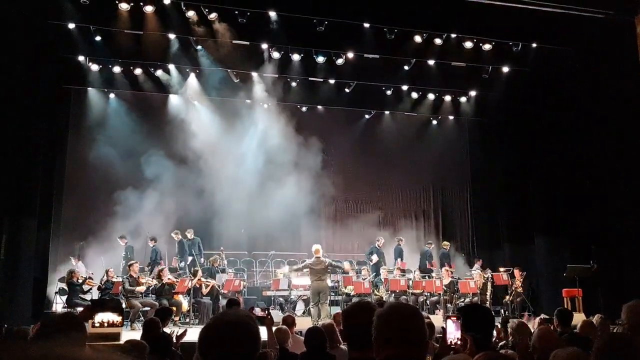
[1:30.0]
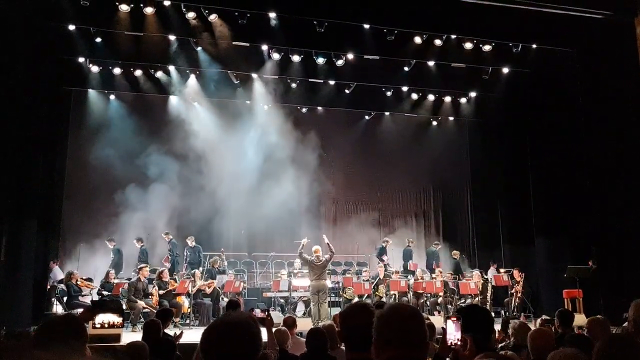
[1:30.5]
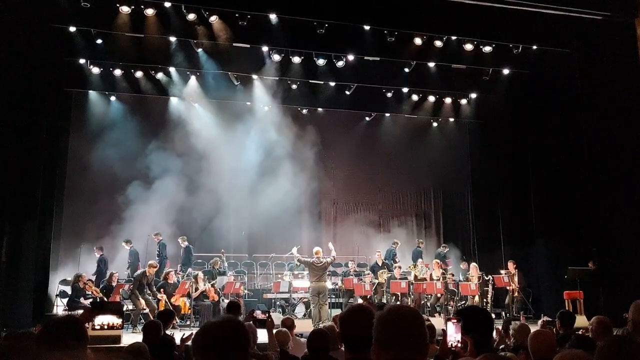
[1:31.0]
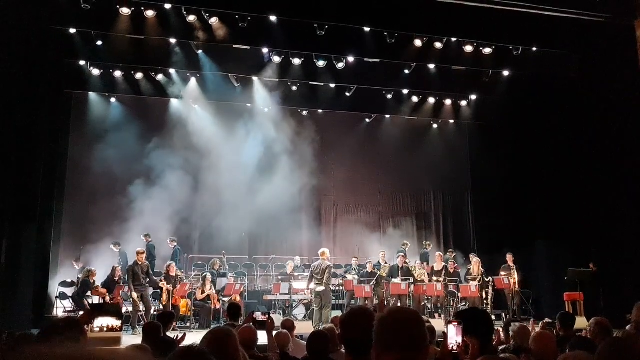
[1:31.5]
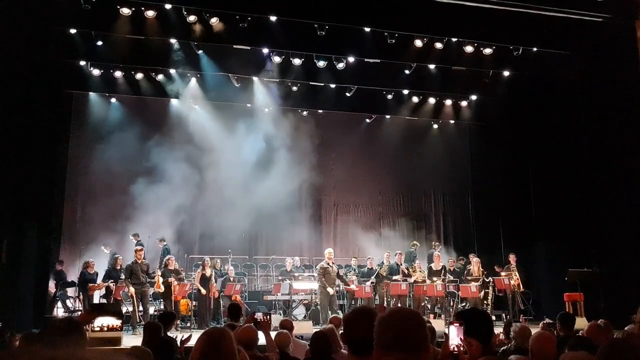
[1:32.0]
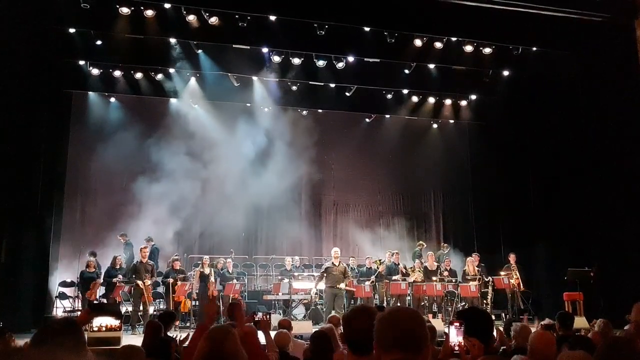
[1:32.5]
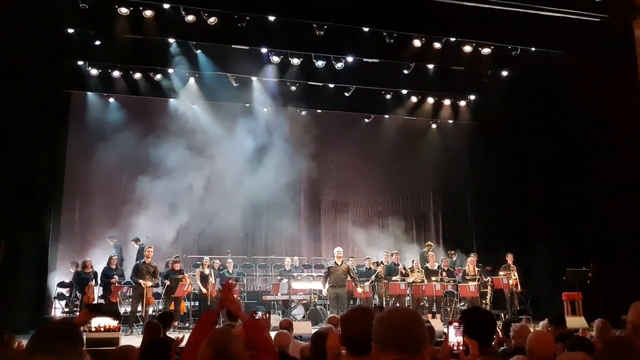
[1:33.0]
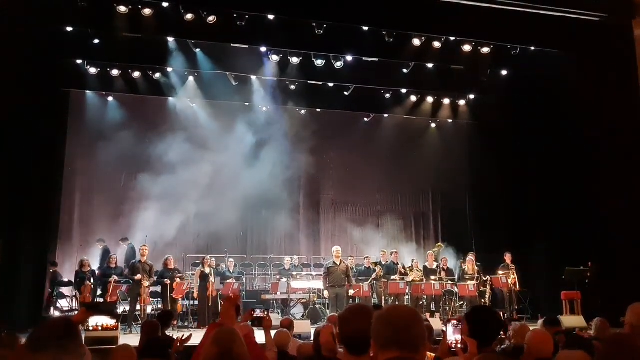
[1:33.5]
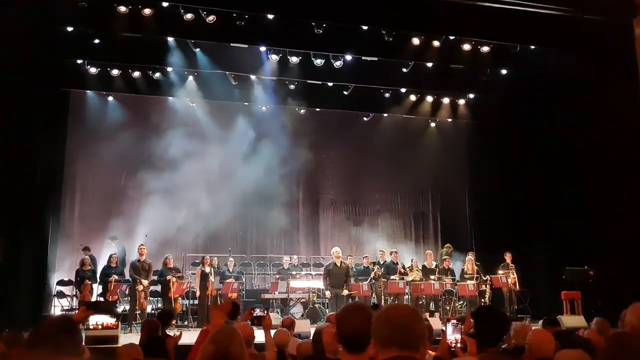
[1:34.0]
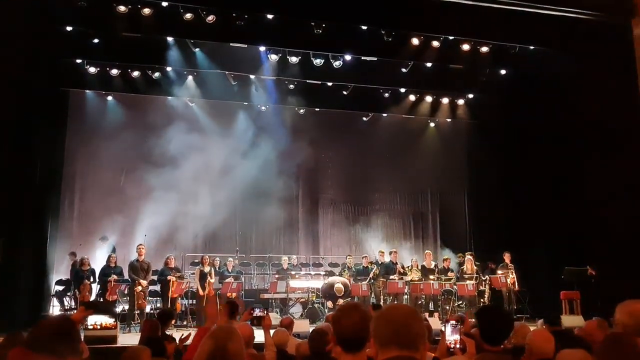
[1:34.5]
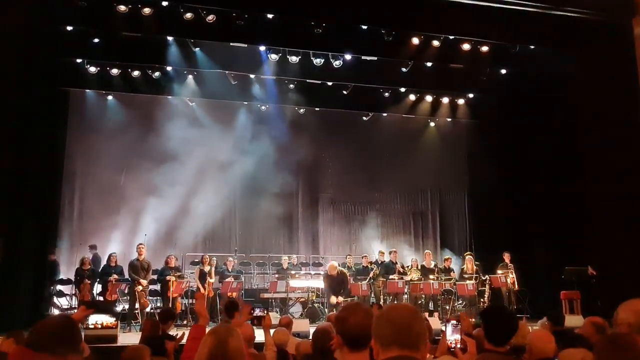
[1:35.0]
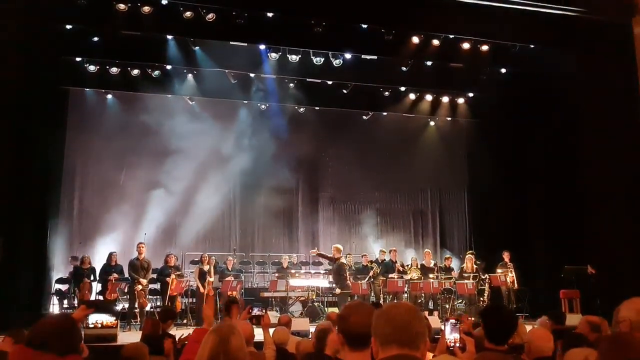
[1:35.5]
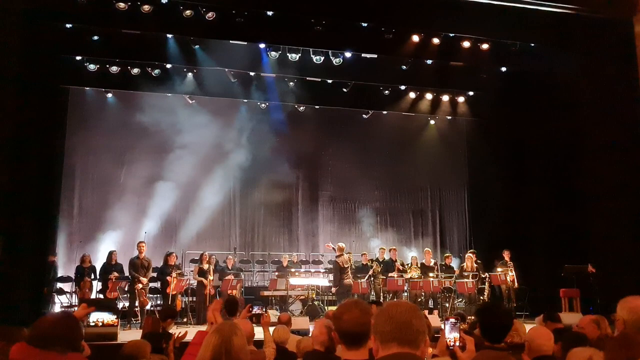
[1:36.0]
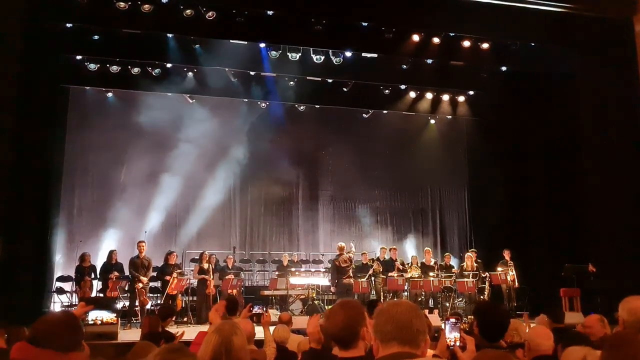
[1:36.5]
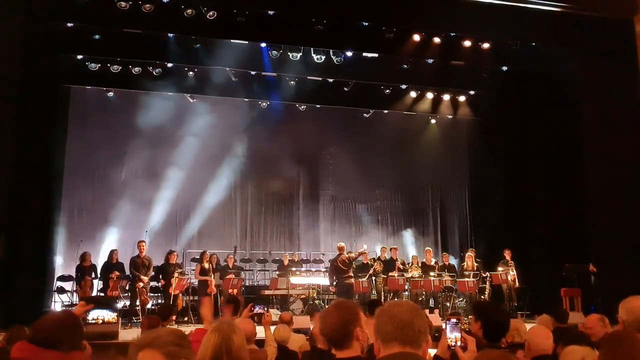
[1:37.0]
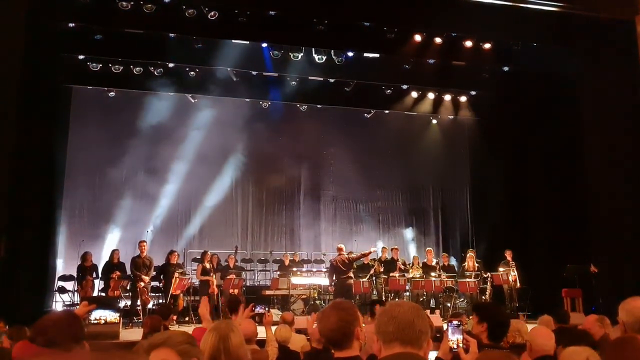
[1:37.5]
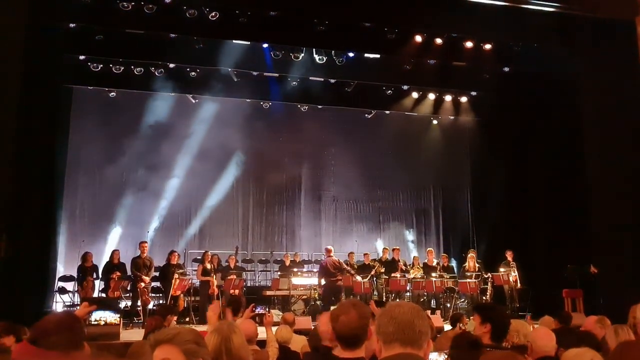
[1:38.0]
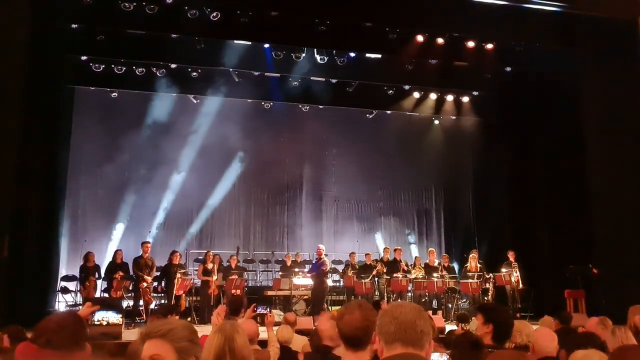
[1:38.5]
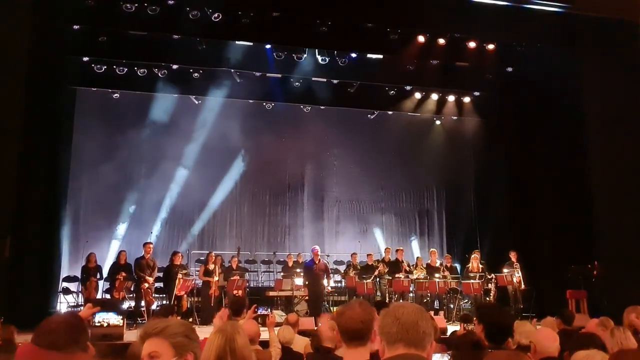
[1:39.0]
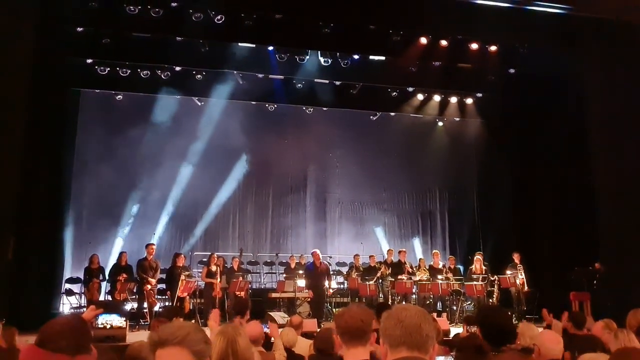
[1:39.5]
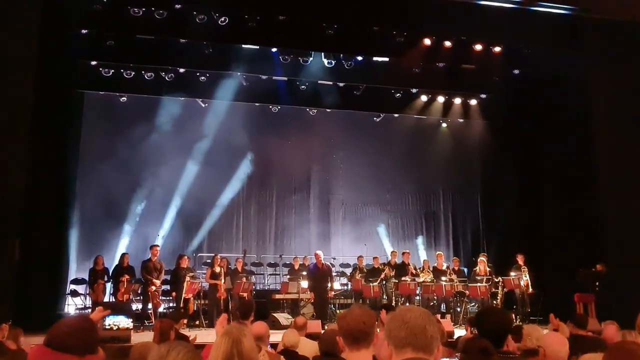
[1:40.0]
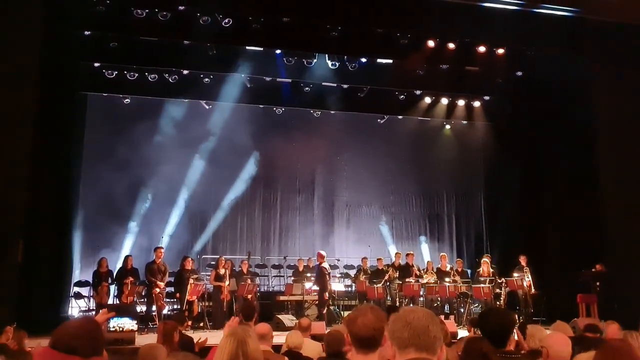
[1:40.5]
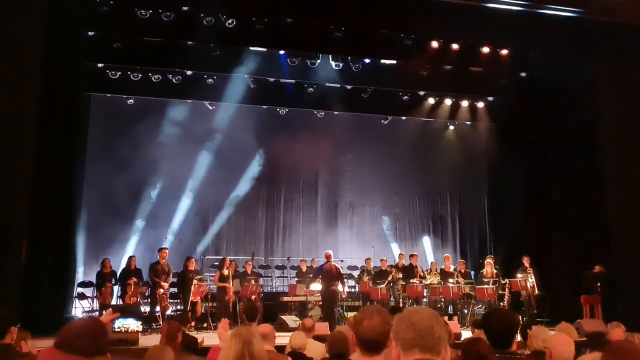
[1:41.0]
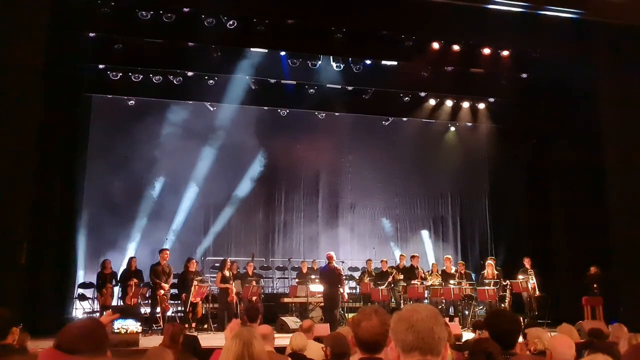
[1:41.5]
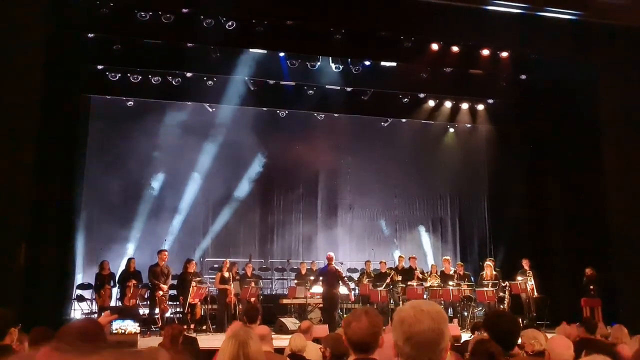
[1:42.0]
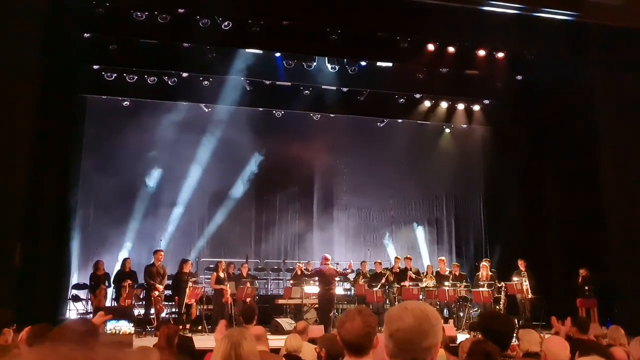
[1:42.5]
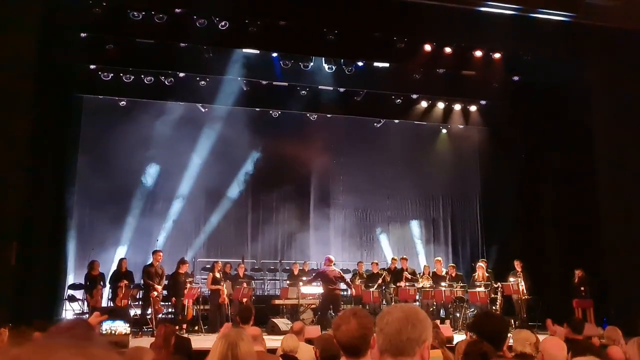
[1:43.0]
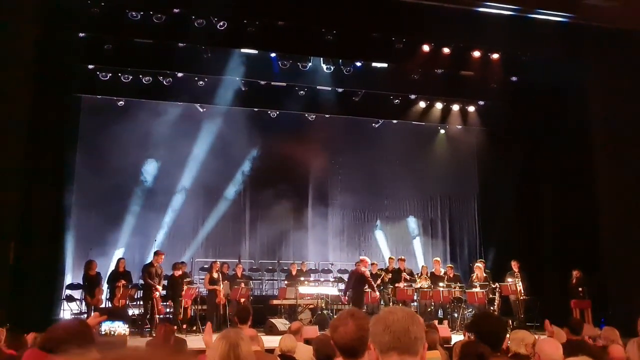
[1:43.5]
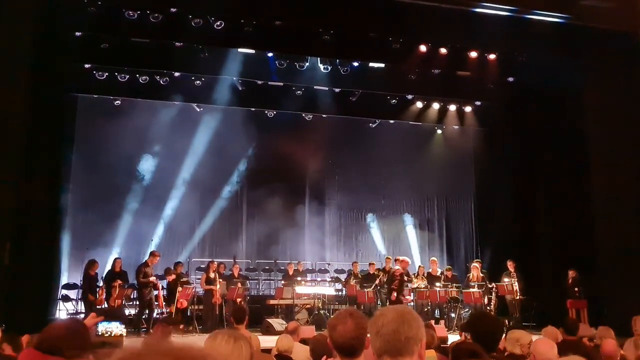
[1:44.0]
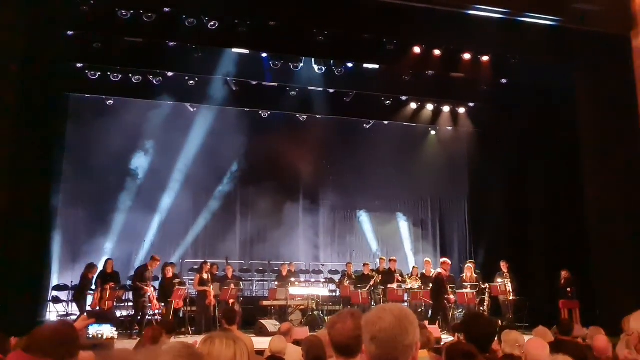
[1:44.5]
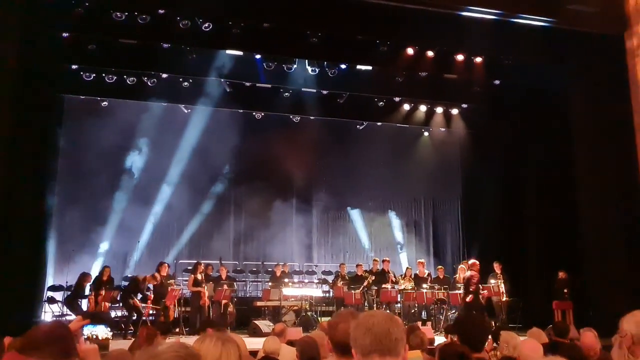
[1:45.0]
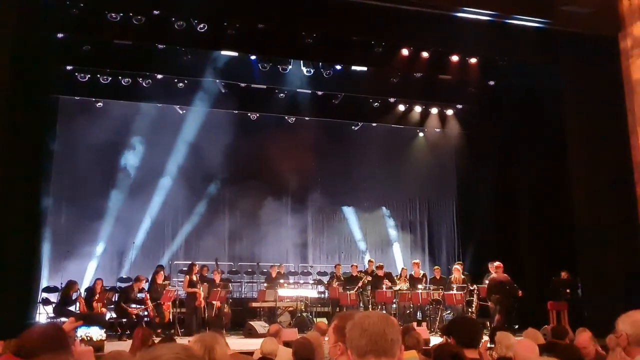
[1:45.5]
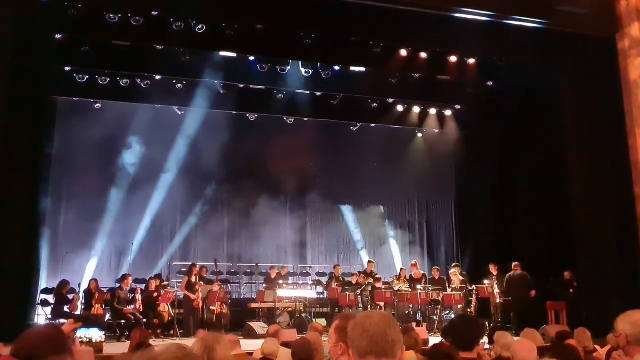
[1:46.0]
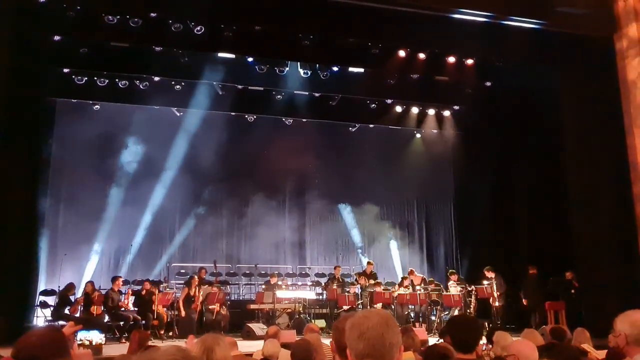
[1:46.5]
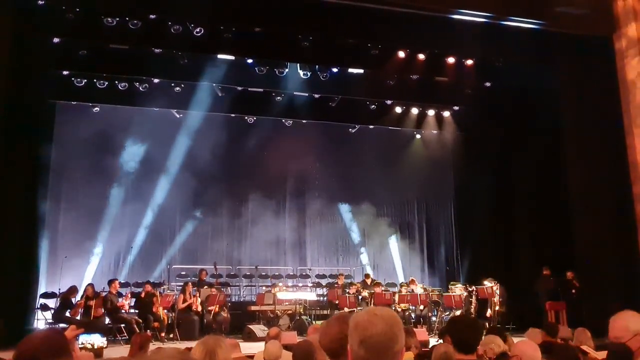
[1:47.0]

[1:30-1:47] The conductor takes his final bow. As the choir members leave and the stage empties, he gives recognition to the instrumentalists who are still seated. He is not in a suit; he appears to wear brown pants and a brown long-sleeved shirt. The smoke is starting to dissipate, and the lighting is not quite as dramatic as it was earlier.